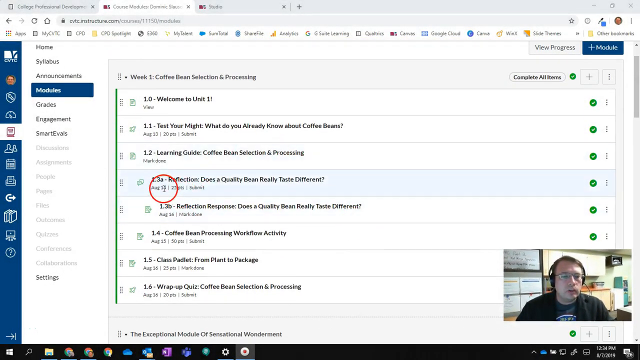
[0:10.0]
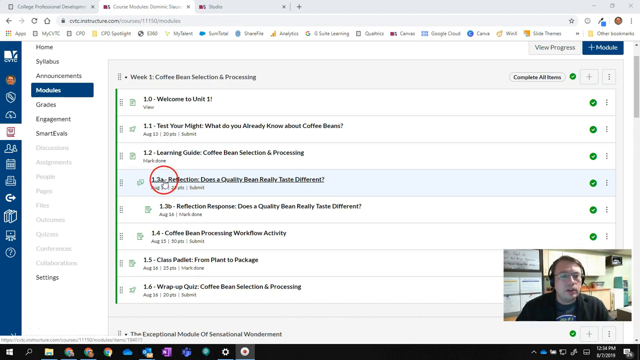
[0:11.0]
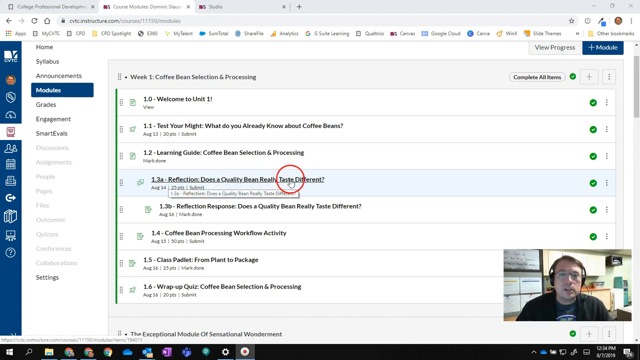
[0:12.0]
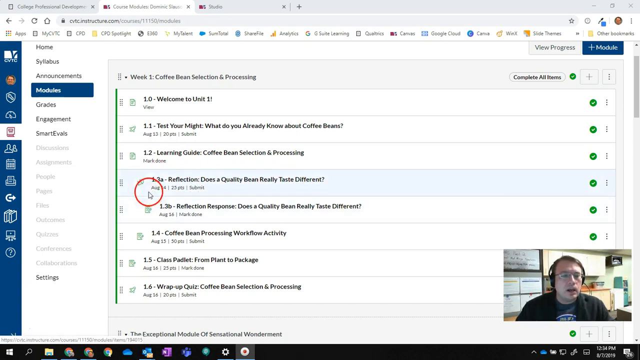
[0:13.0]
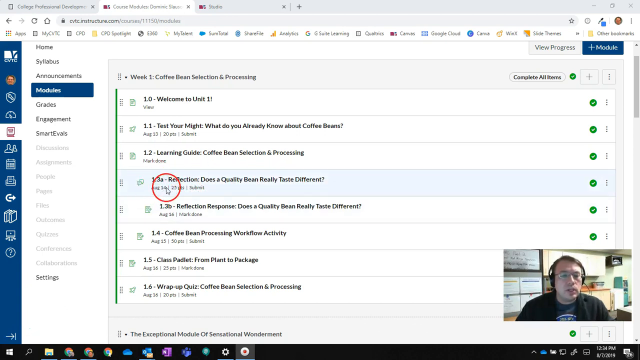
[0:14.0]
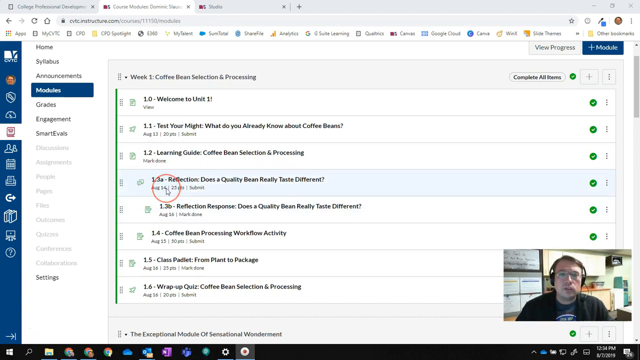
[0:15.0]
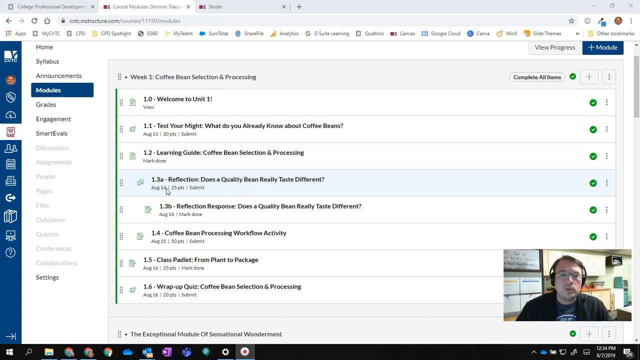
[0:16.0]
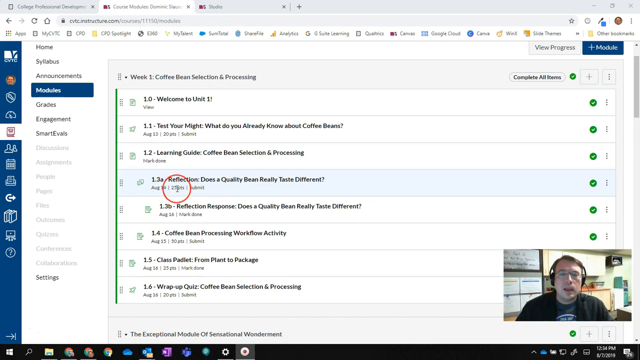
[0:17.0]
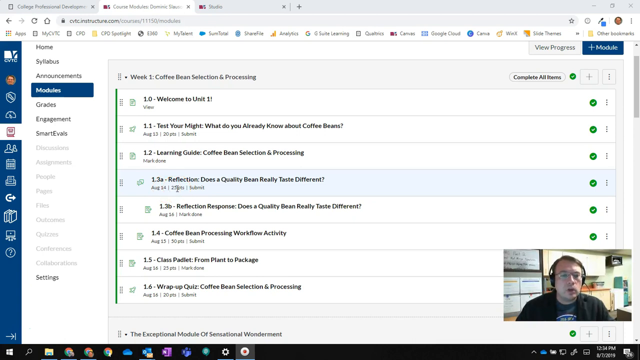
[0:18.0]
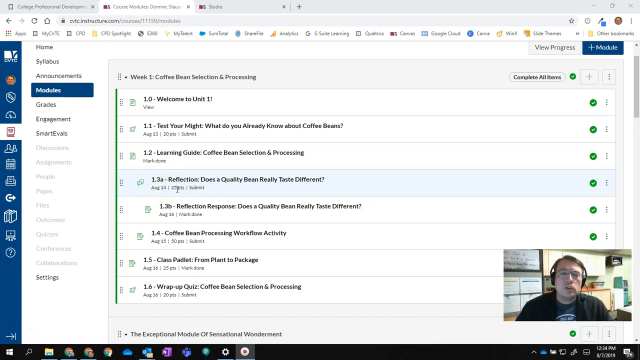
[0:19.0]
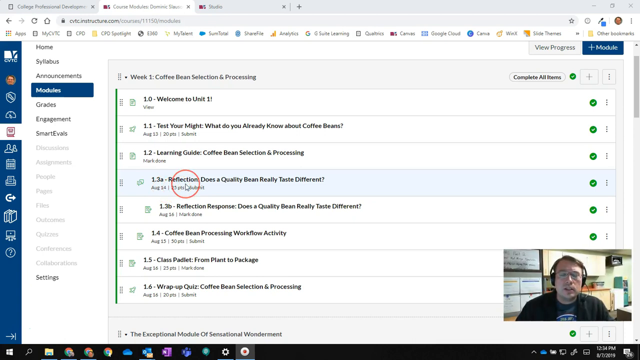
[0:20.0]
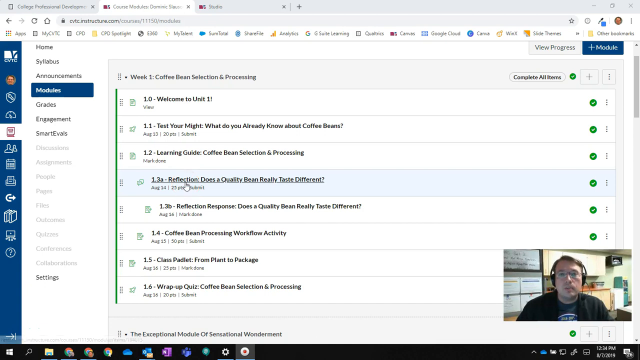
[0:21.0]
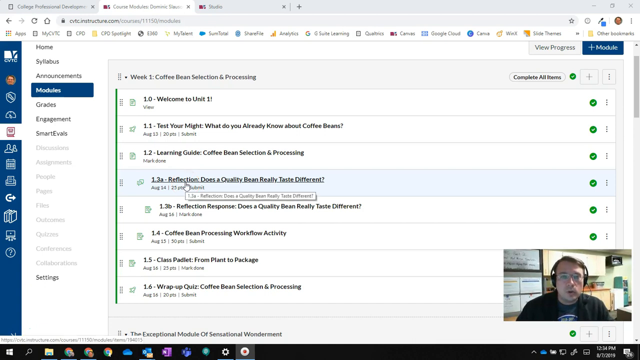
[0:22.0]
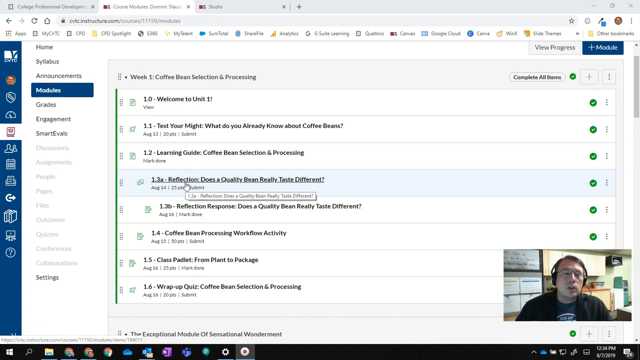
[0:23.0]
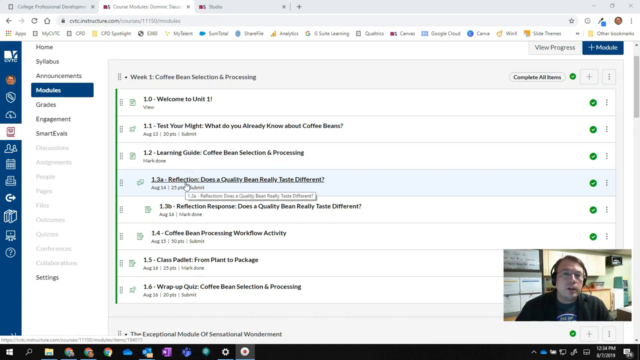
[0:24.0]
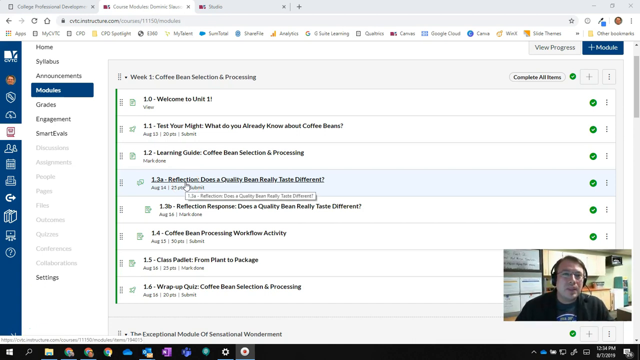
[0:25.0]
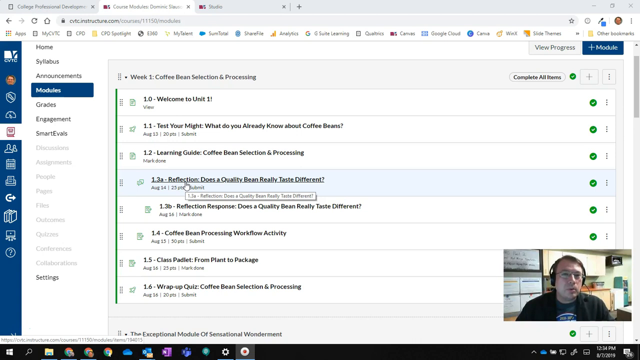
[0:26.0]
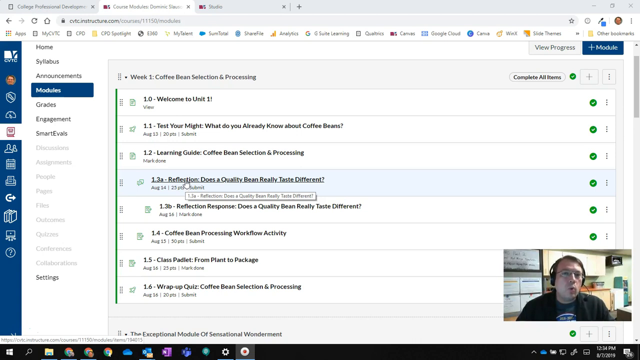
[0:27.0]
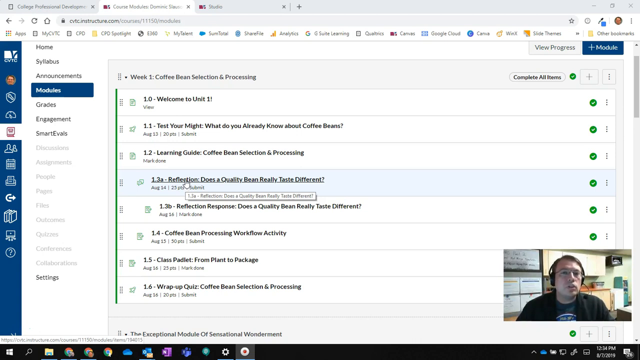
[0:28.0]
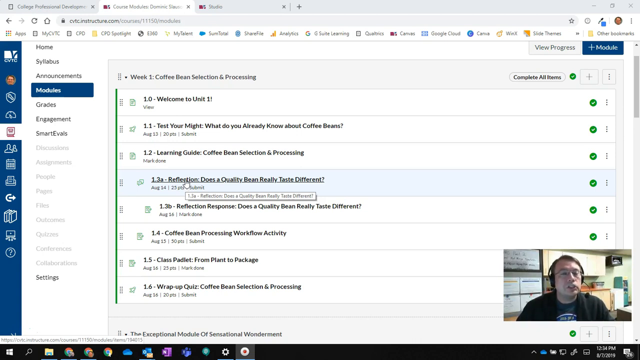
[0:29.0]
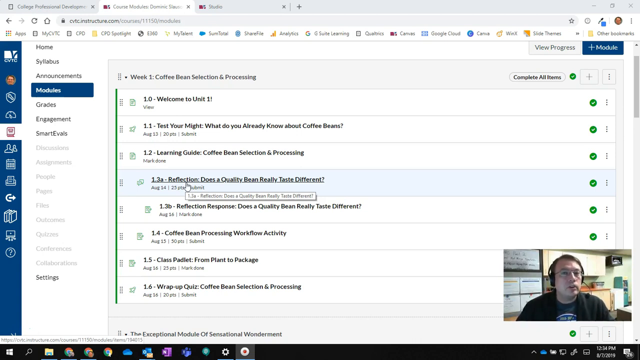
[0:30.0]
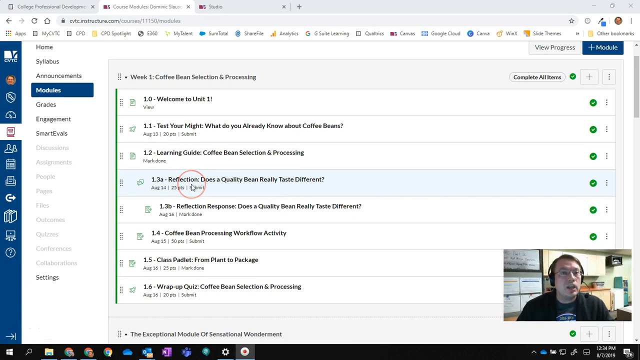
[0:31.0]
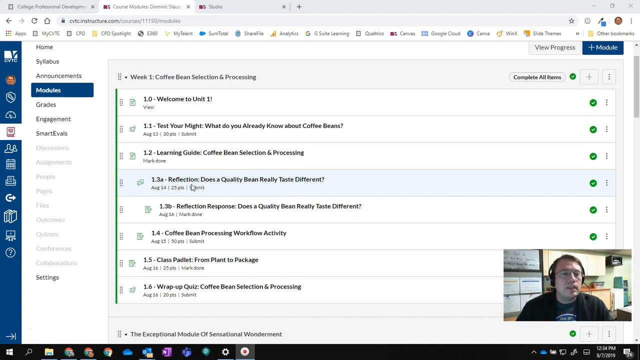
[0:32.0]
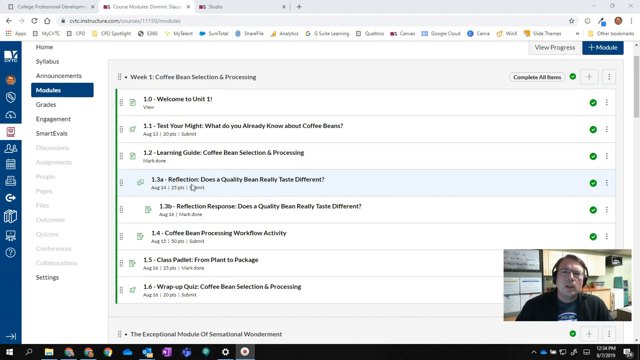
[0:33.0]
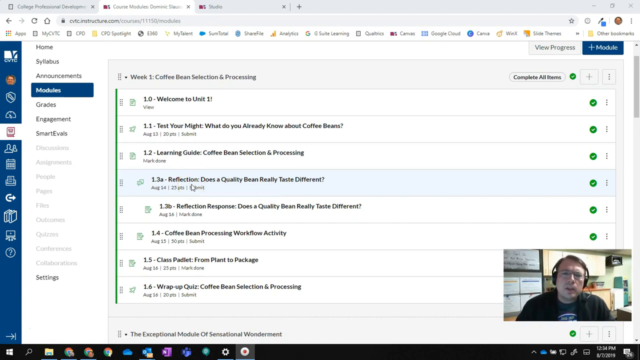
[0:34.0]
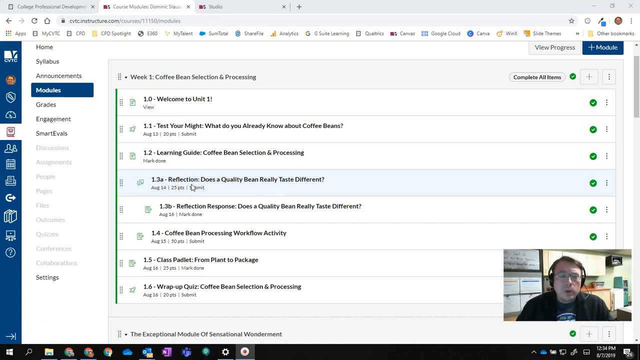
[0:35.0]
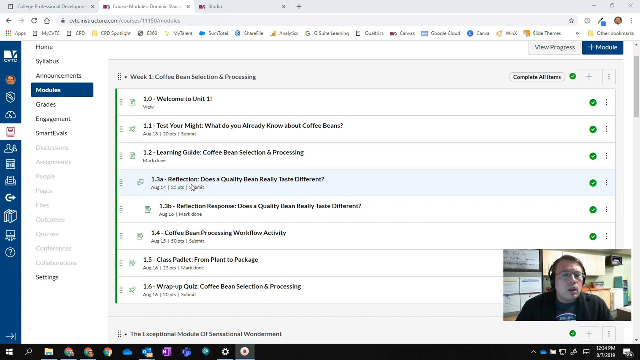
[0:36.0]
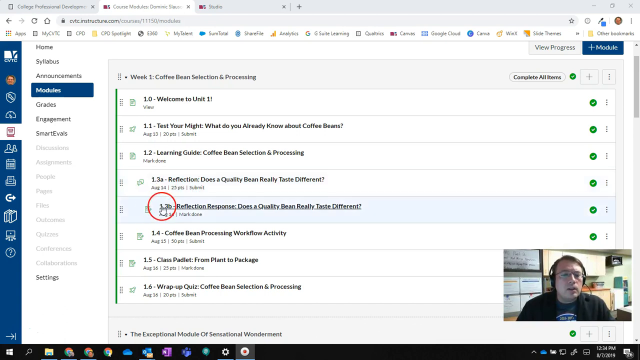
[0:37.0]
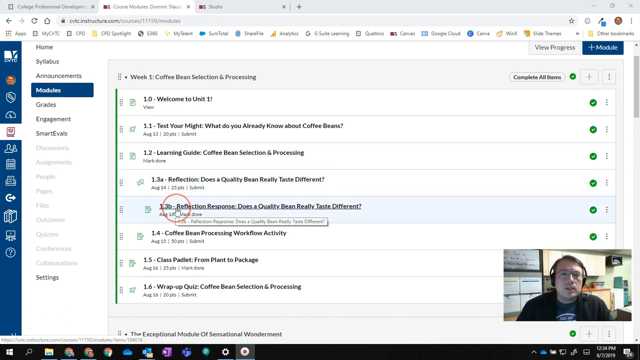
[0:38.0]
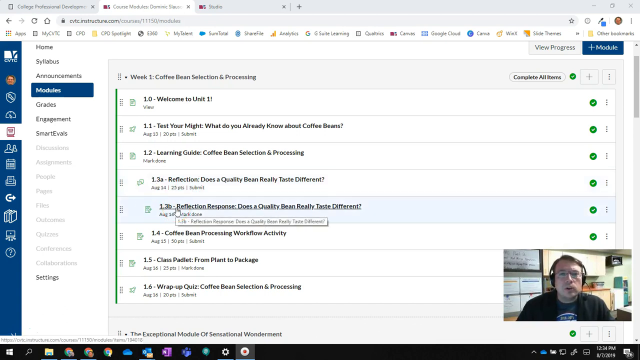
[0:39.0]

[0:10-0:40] A man looks into the camera as he records a video while speaking. He wears a black blazer, a black t-shirt, black headphones and glasses. In the background are a small kitchen, a small fridge and some cupboards. He is sitting at the desk. He shares his PC screen, which shows school-related material with instructions, the name of the page, the date it was submitted and the number of pages. He seems to be an online tutor who makes videos.